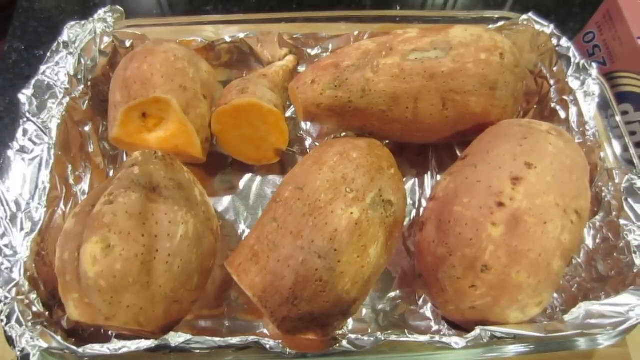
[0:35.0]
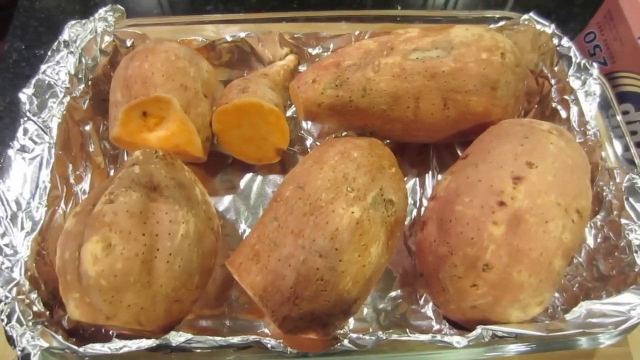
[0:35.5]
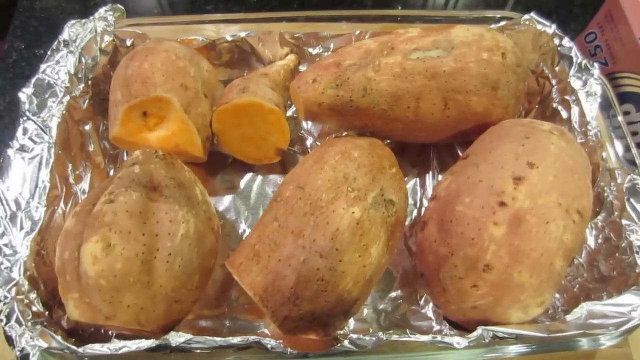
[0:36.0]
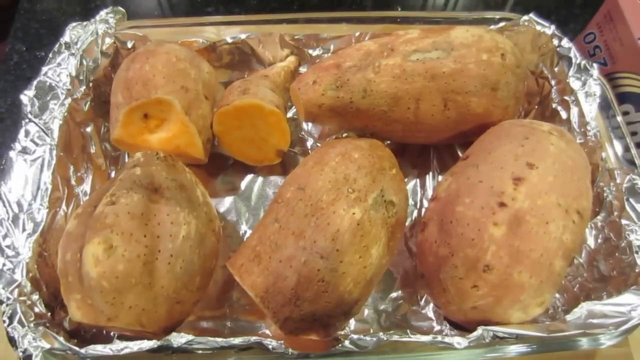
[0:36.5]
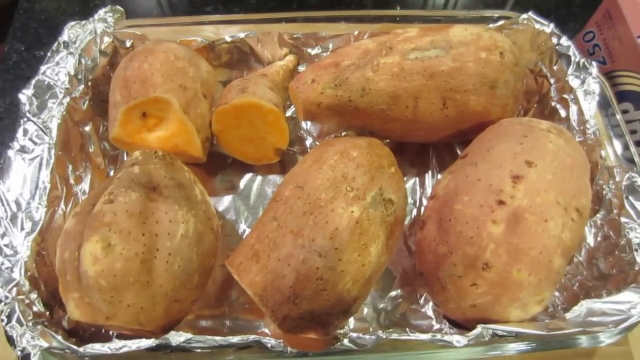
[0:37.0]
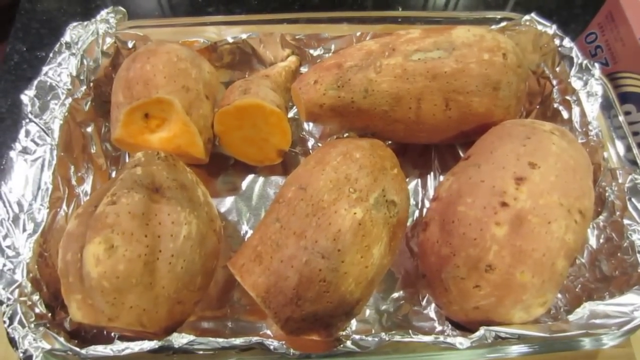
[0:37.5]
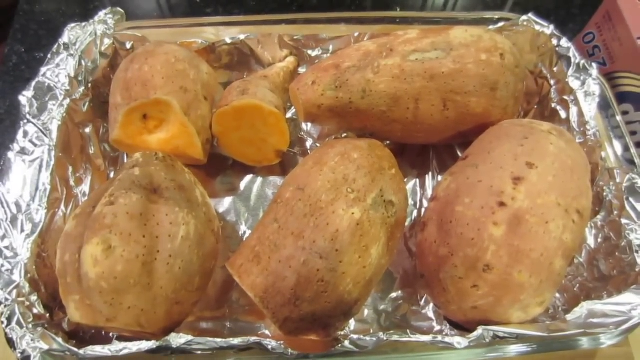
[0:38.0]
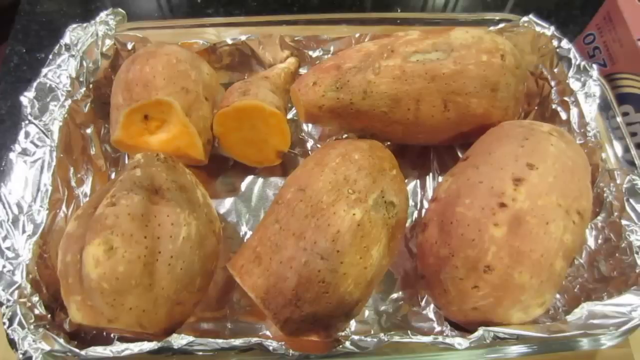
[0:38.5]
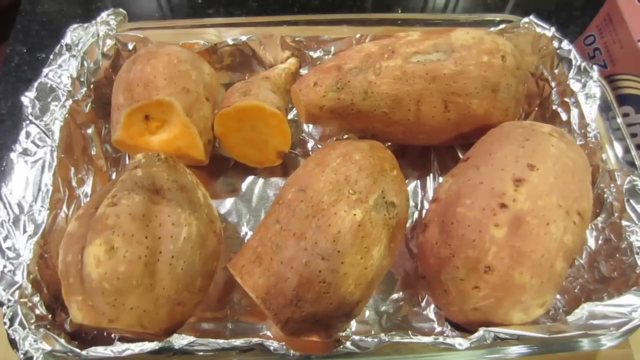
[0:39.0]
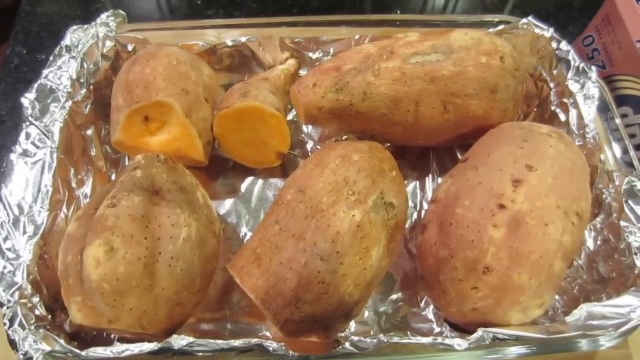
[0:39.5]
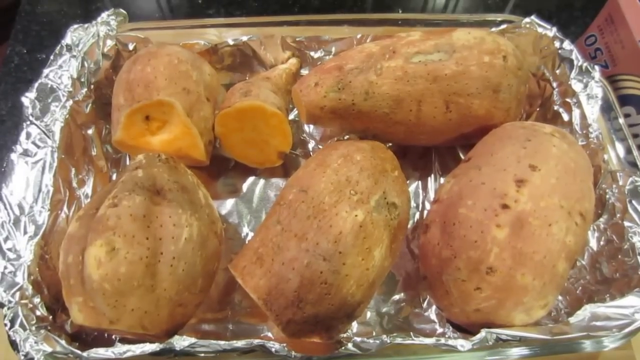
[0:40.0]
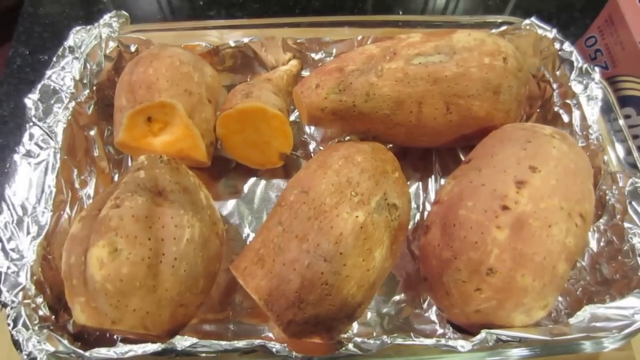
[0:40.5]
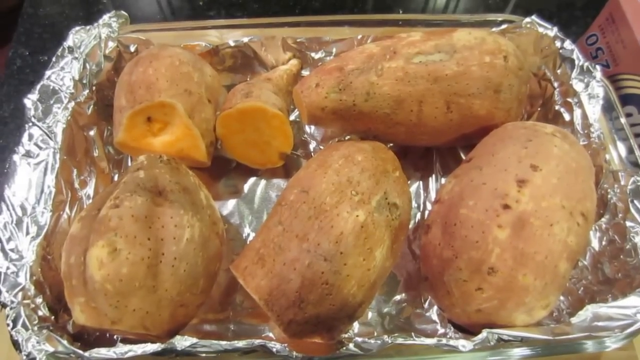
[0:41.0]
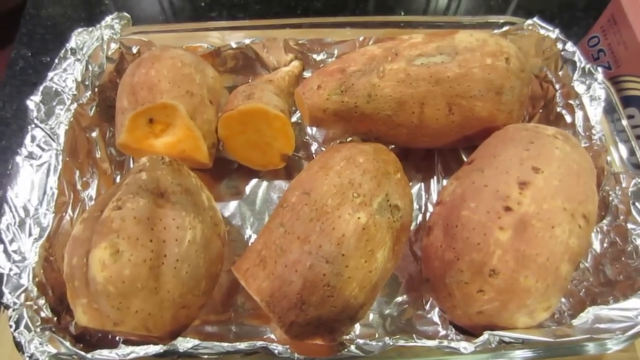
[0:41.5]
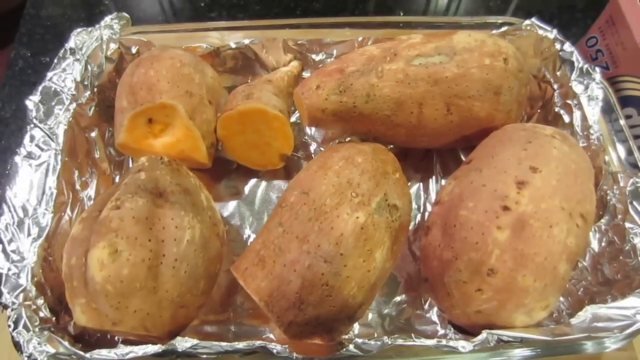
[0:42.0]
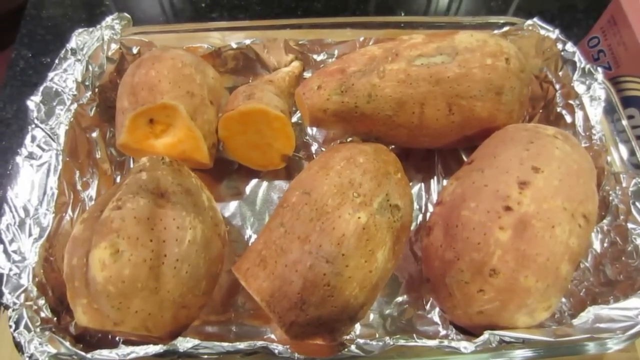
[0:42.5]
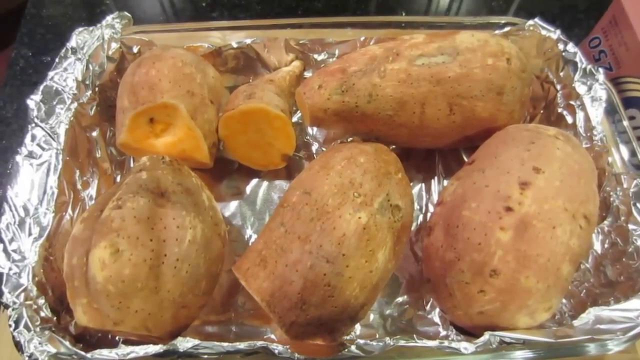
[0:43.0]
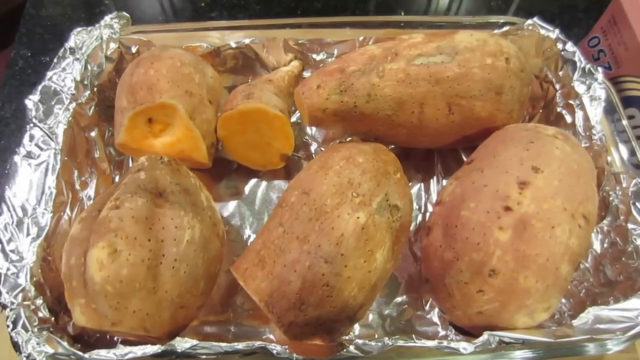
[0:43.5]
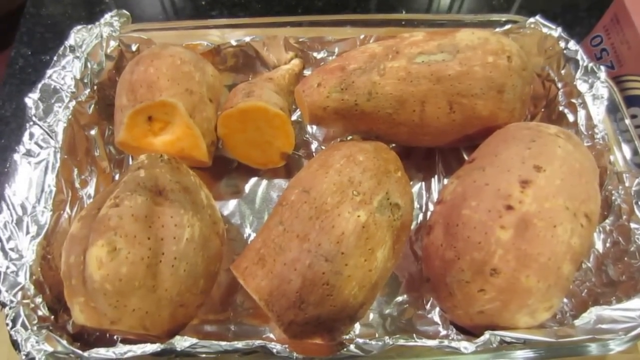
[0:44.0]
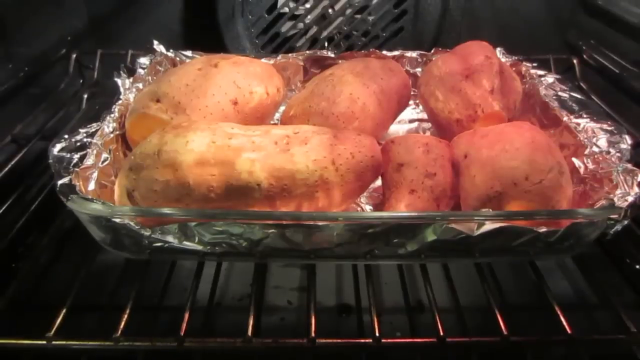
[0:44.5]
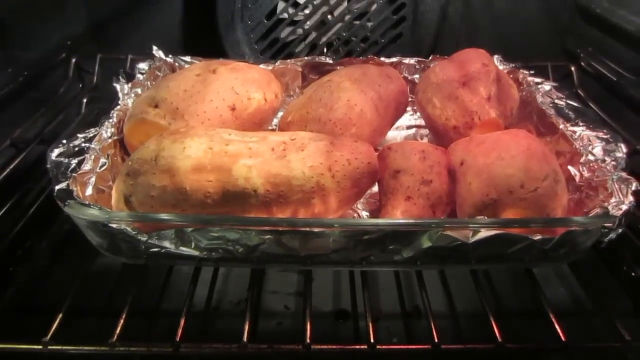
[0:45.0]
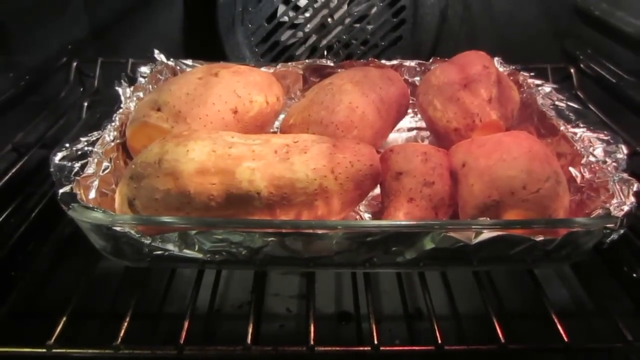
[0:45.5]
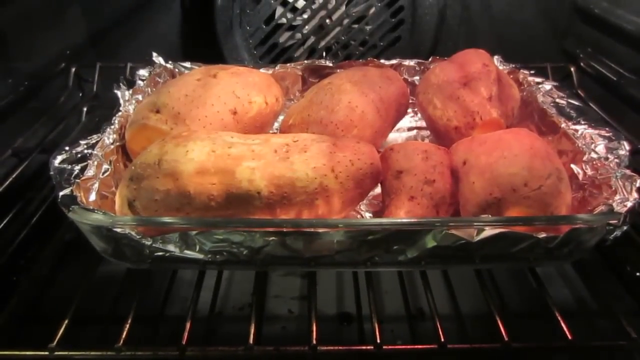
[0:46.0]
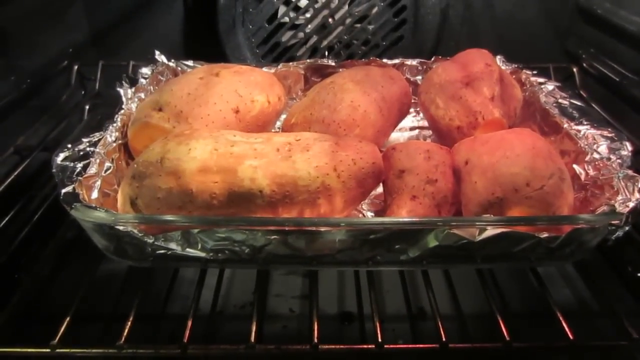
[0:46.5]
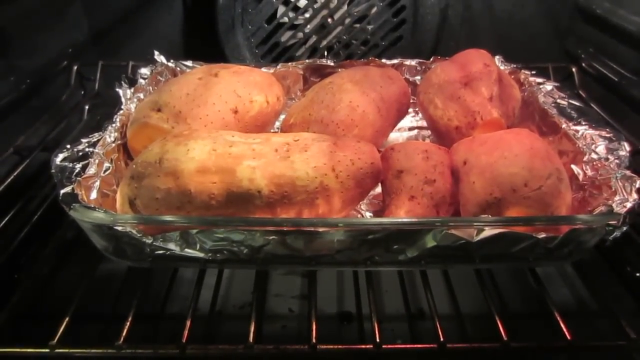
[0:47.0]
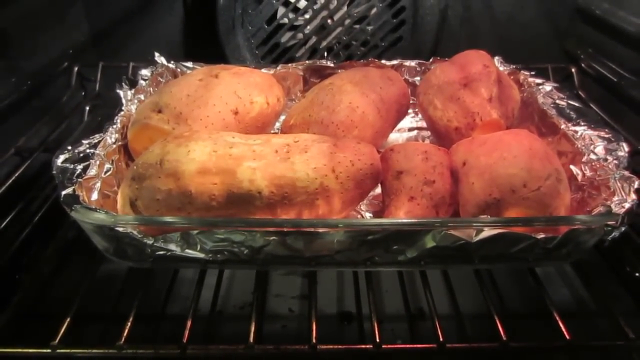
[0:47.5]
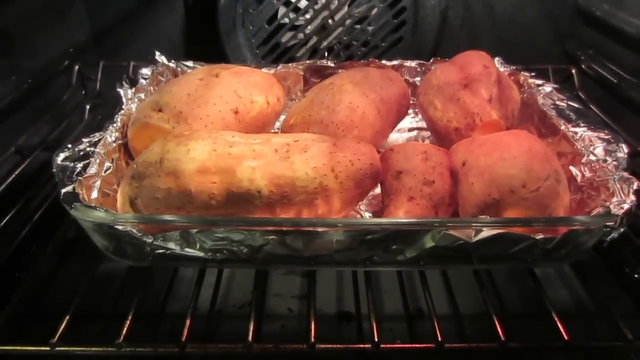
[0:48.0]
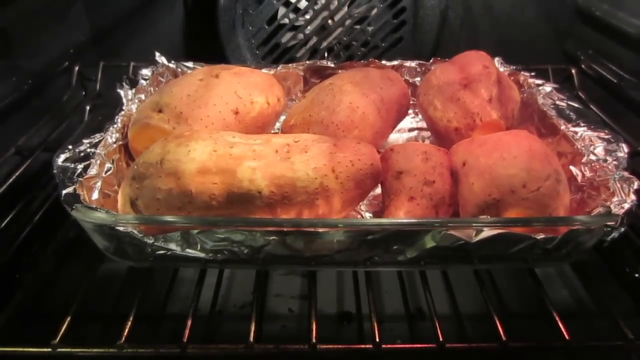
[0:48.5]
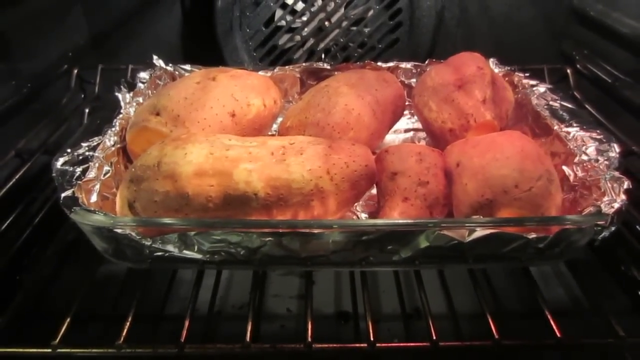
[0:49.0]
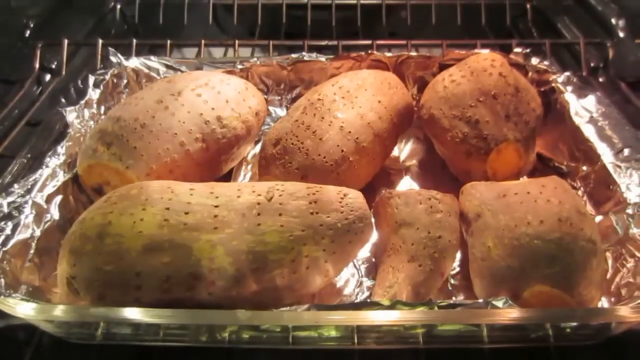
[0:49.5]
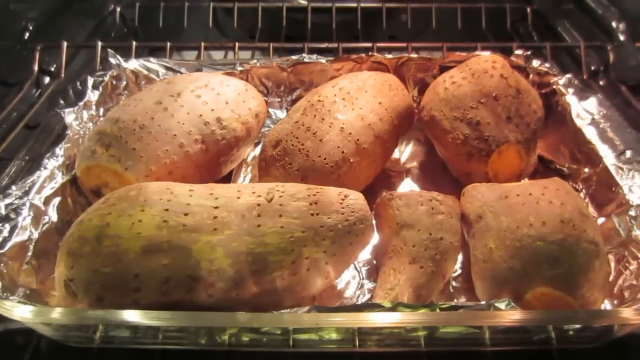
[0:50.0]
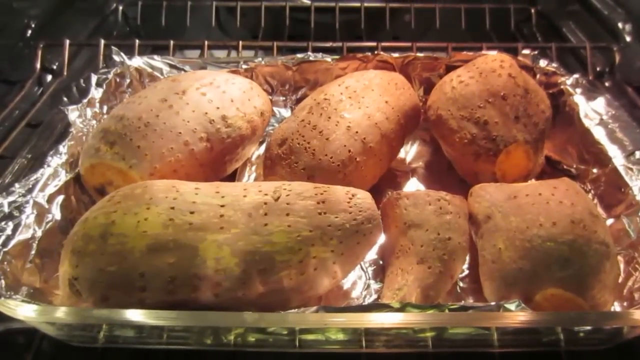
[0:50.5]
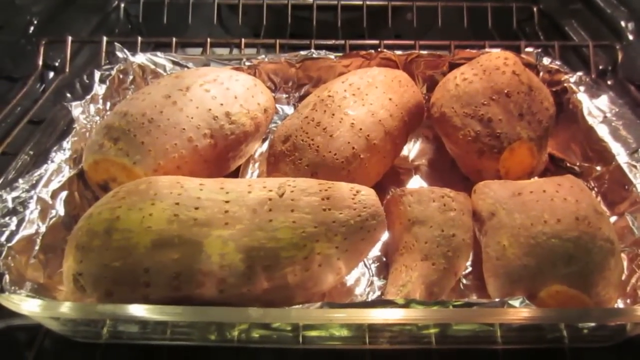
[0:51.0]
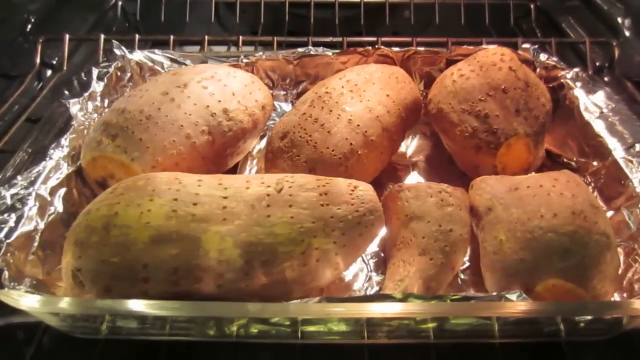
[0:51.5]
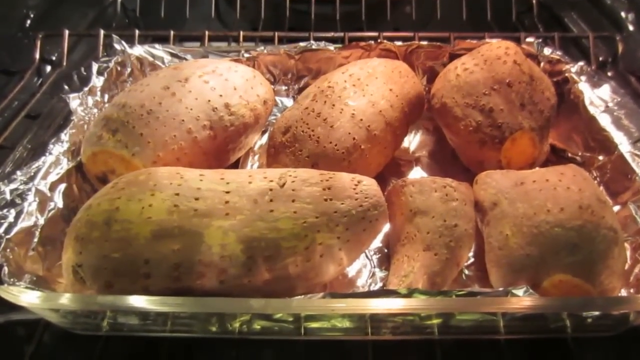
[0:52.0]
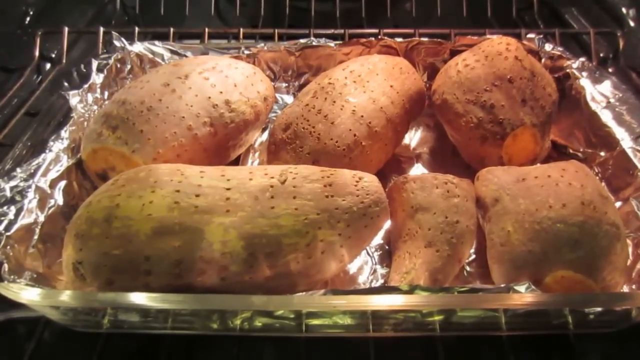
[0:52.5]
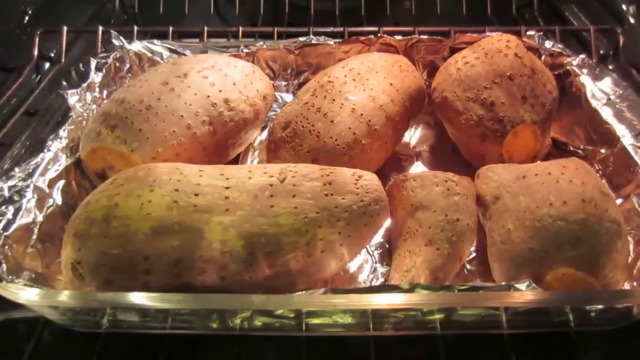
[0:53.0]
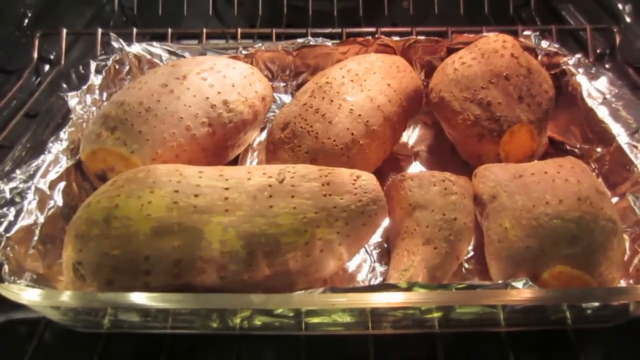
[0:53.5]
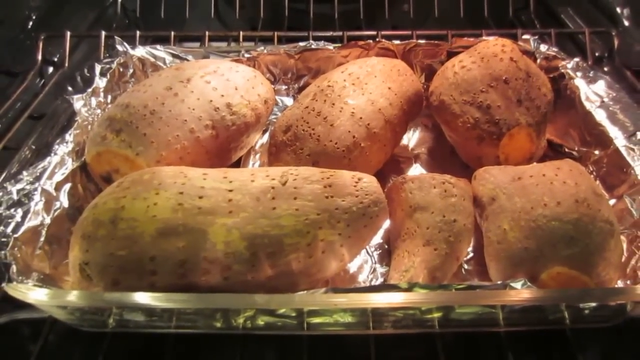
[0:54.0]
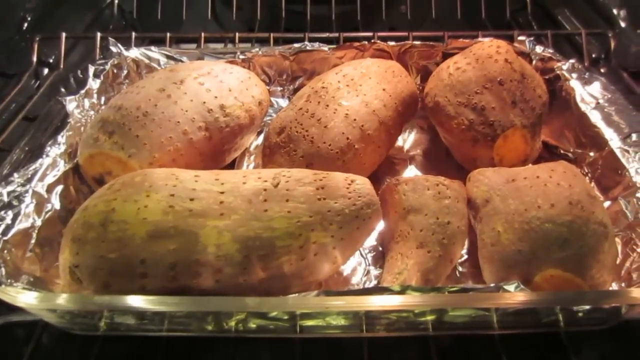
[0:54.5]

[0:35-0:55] The view of the six large, tightly packed sweet potatoes on aluminum foil in the glass baking dish changes to a side view of them in the oven, with the oven light glaring down on them. The camera then cuts in closer so that the oven is no longer visible, only the sweet potatoes, and the many little hole marks on top, presumably made by a fork, are clearer because the light from the oven shows their shadows more clearly. The camera is still unsteady, moving back and forth as it shows the sweet potatoes in the oven and then gets closer for a close-up of the six pieces. It looks like the sweet potatoes were placed in the oven rotated 180 degrees from the original view, so the ones that were farther away are now closer.